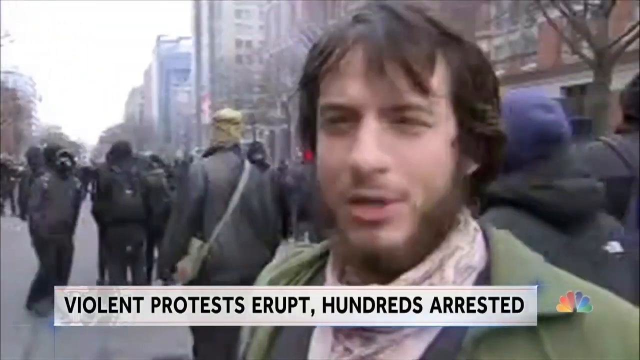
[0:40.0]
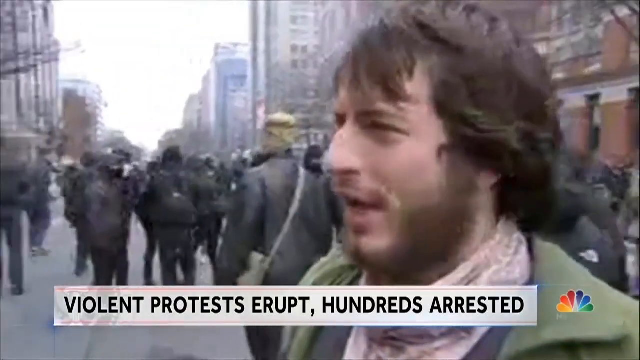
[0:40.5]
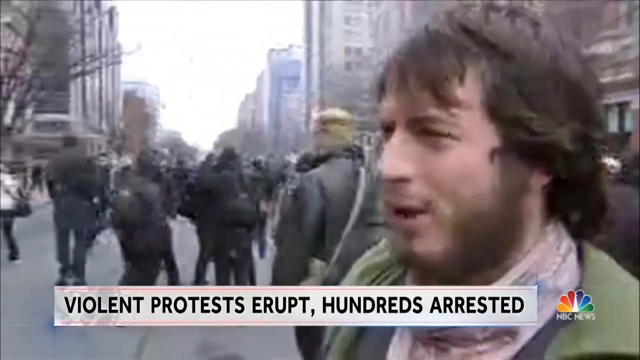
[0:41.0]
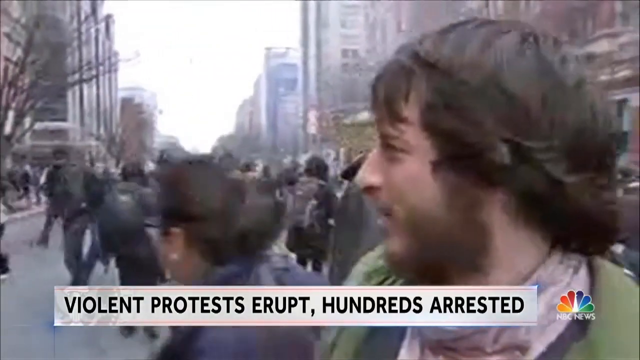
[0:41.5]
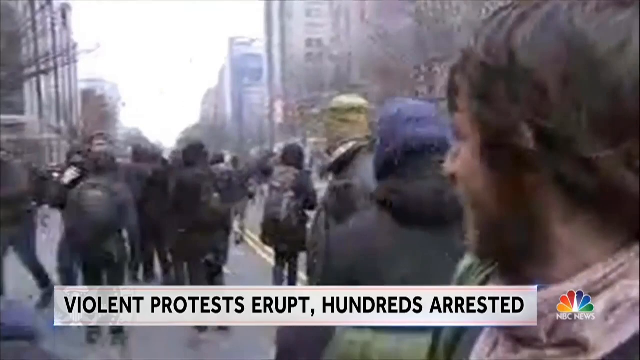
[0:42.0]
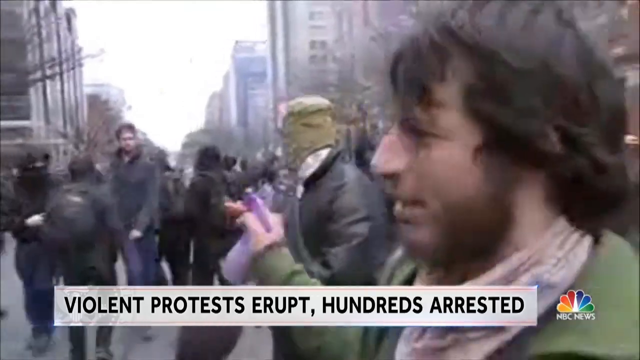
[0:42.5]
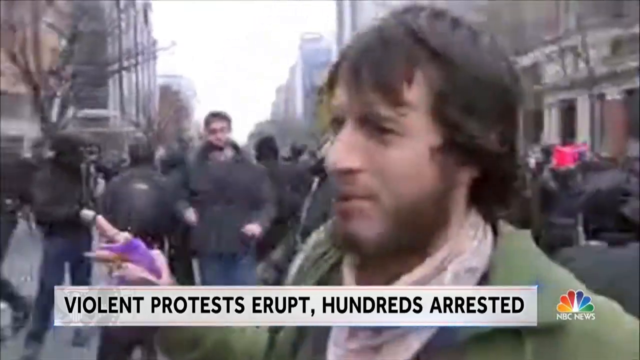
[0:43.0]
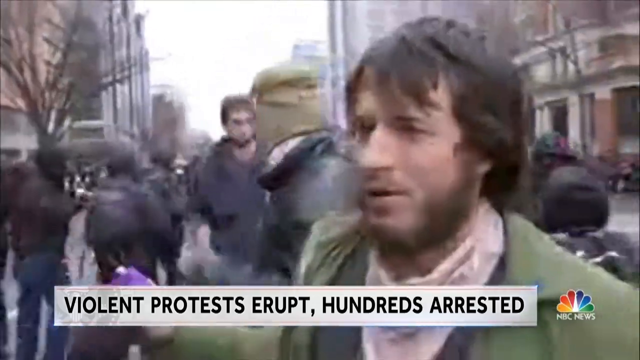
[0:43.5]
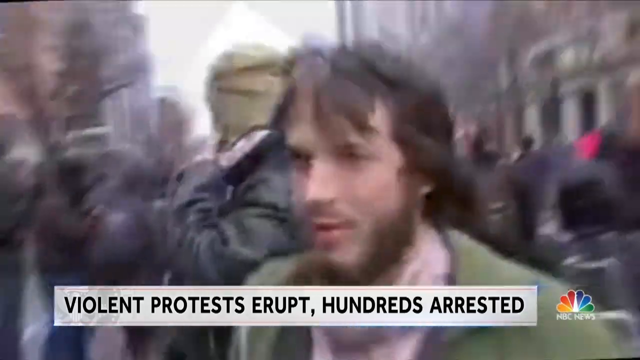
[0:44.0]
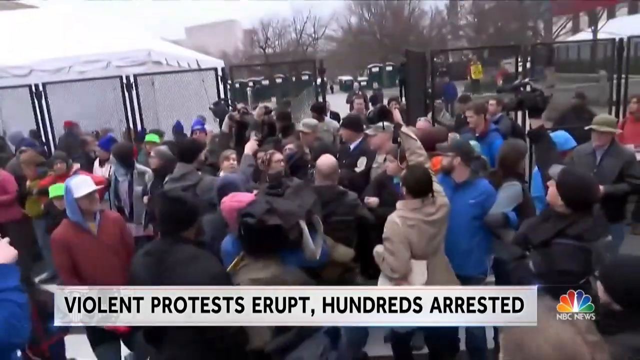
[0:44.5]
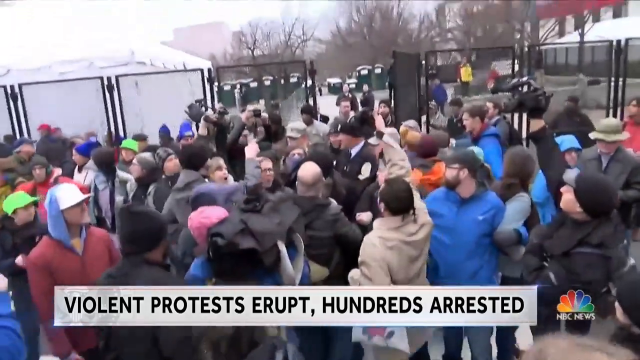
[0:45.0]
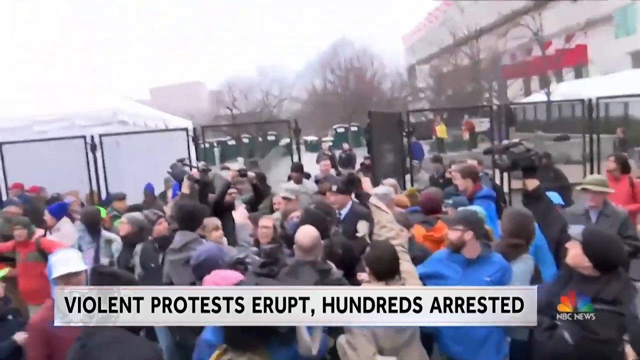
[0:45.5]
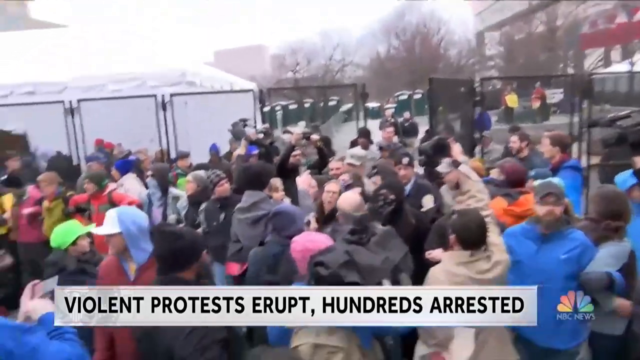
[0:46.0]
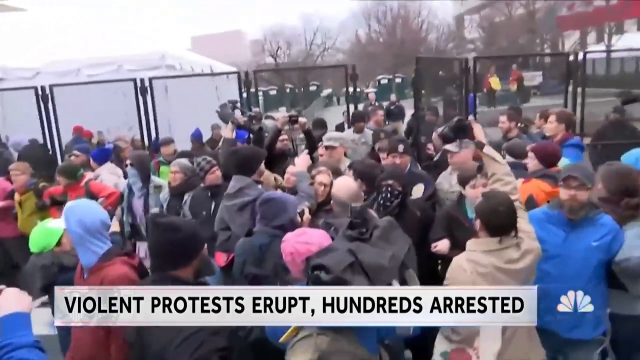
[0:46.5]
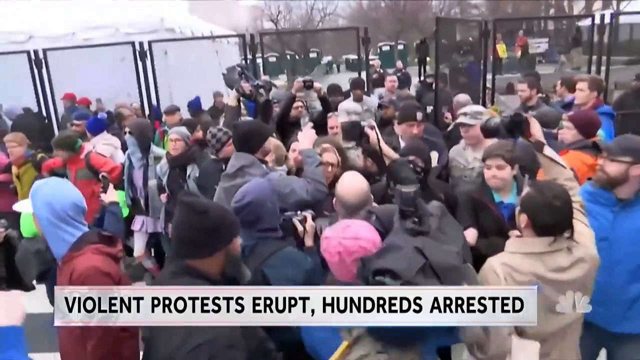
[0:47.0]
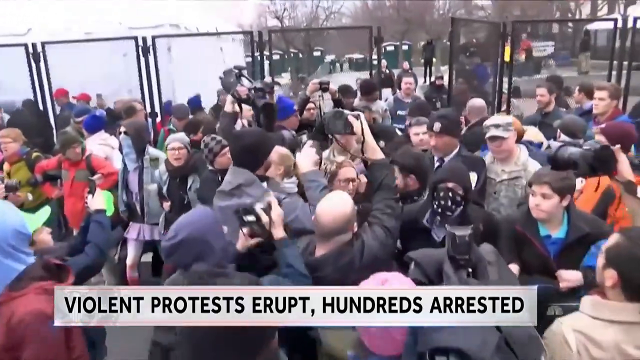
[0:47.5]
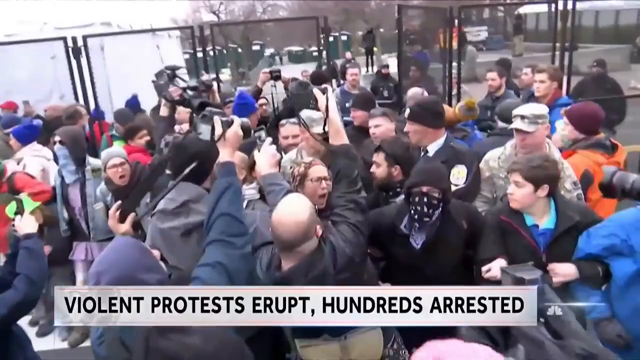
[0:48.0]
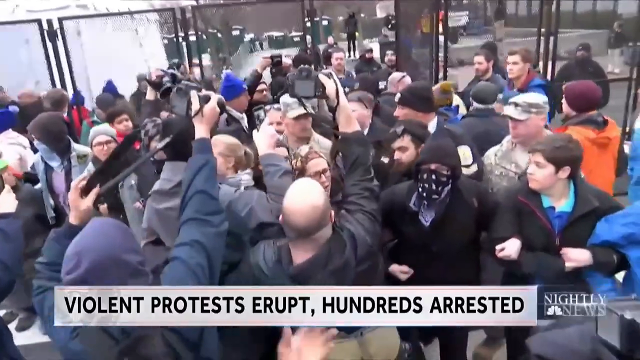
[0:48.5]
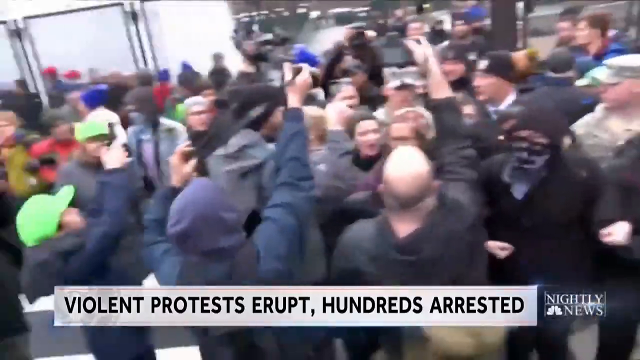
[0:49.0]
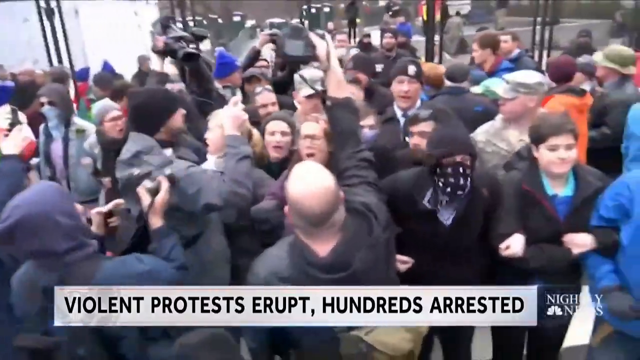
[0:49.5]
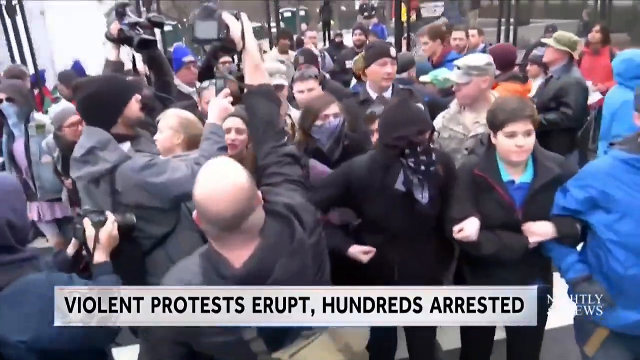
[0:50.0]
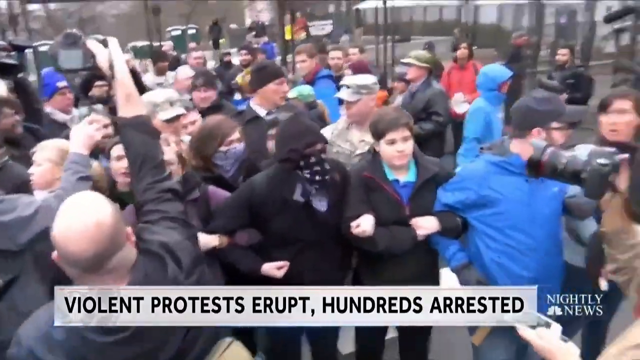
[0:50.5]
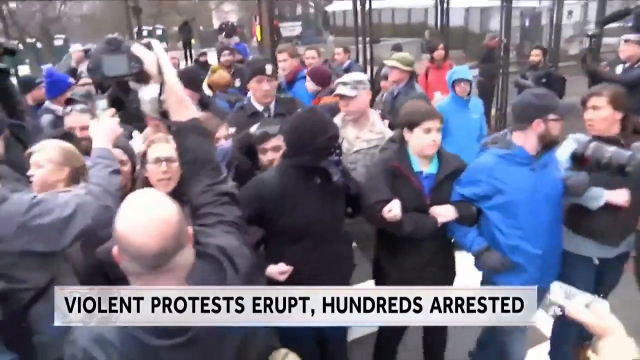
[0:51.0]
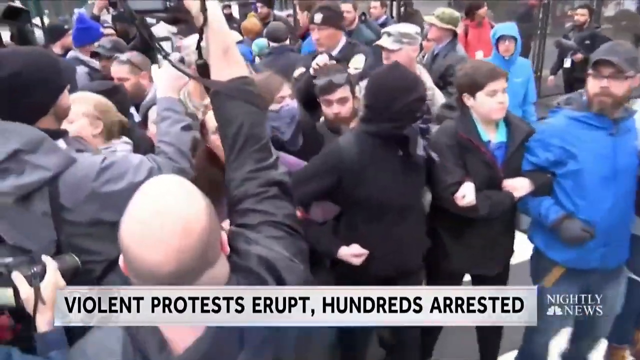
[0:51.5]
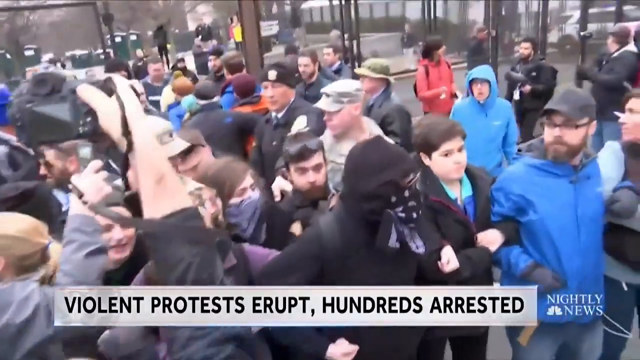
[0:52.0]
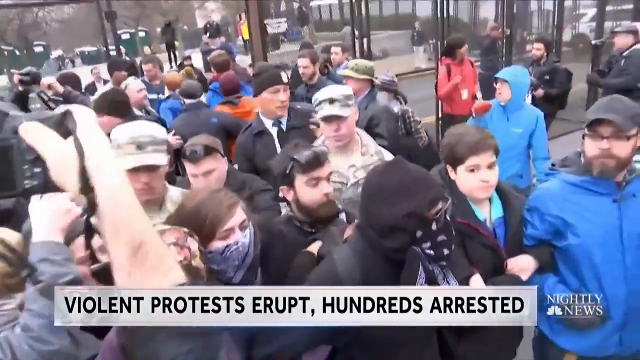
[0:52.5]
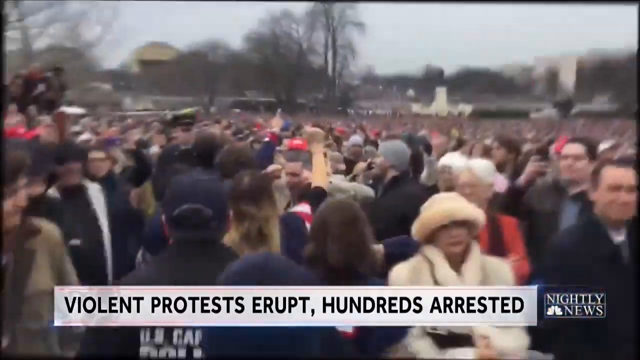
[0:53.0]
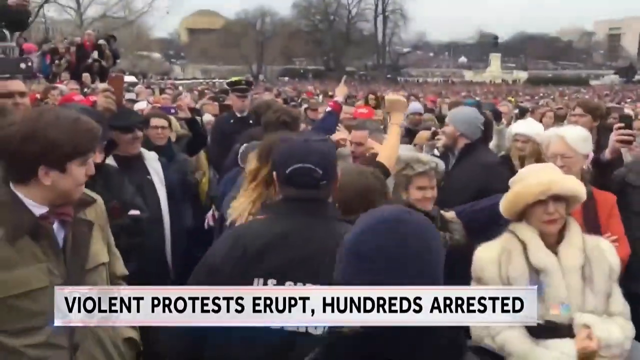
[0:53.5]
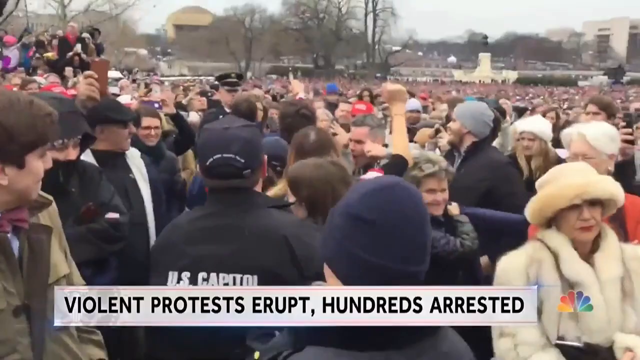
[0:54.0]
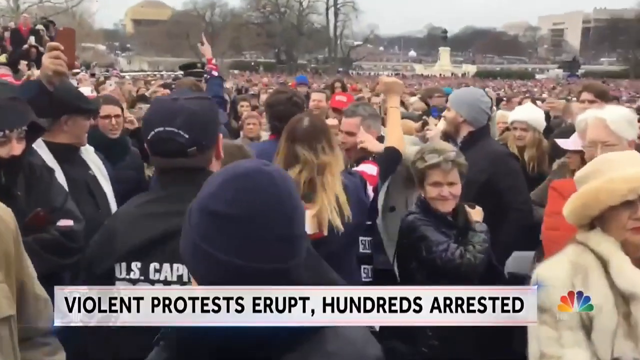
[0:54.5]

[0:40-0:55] People run away from the tear gas. A large swath of people are locked arm in arm, holding some sort of line or demonstration, apparently trying to keep people out of a certain area. There seem to be many National Guard members in the crowd, along with police, and many of the people seem frustrated. Another scene shows people running away from the tear gas and other danger. Many members of the press record the people.